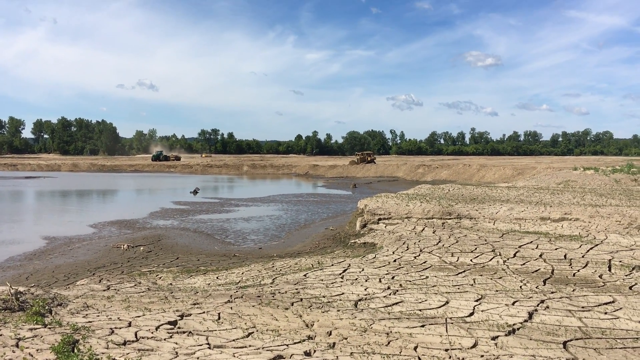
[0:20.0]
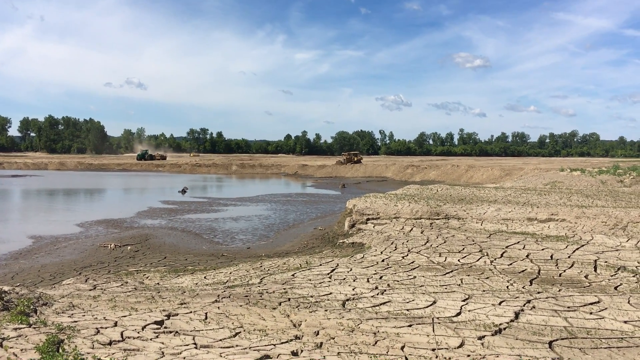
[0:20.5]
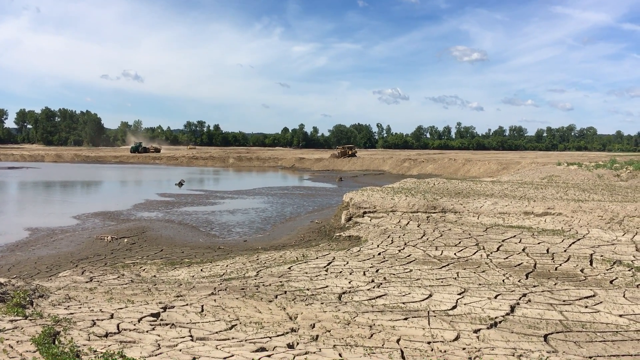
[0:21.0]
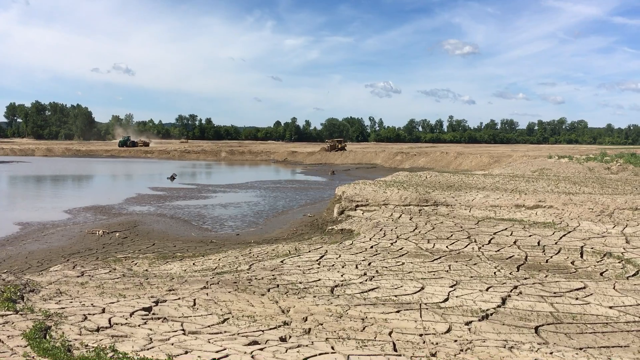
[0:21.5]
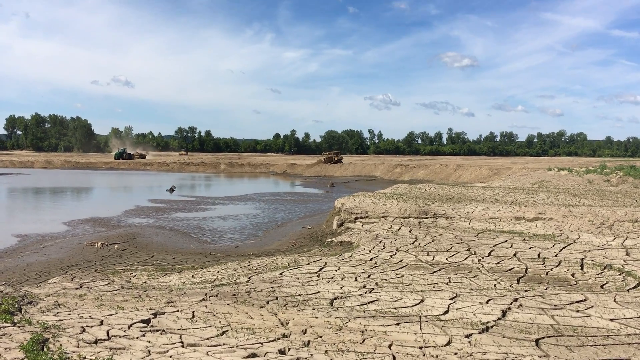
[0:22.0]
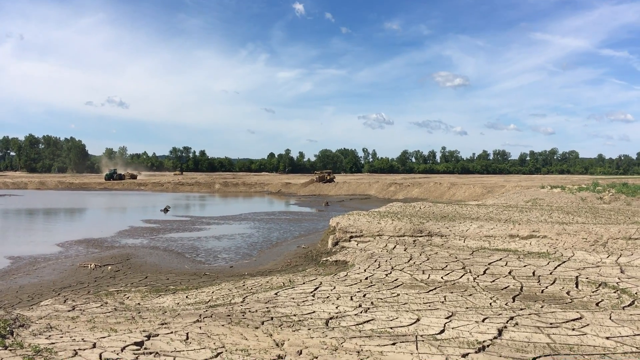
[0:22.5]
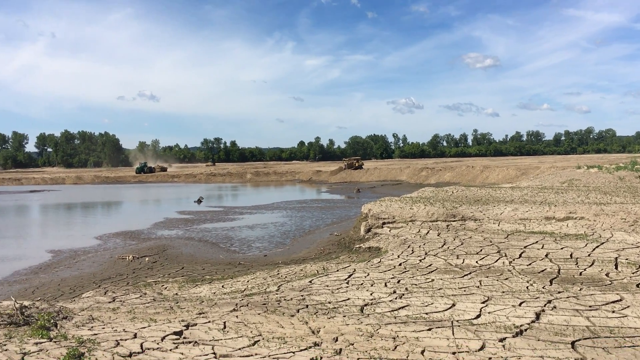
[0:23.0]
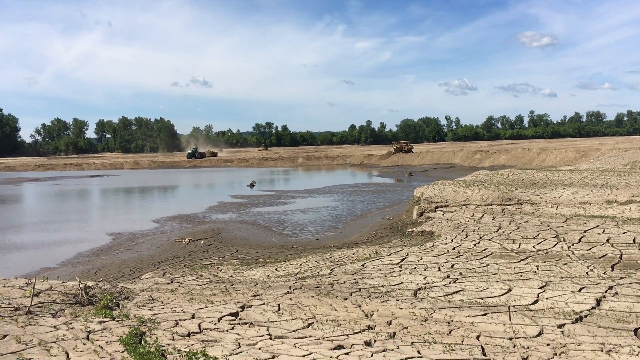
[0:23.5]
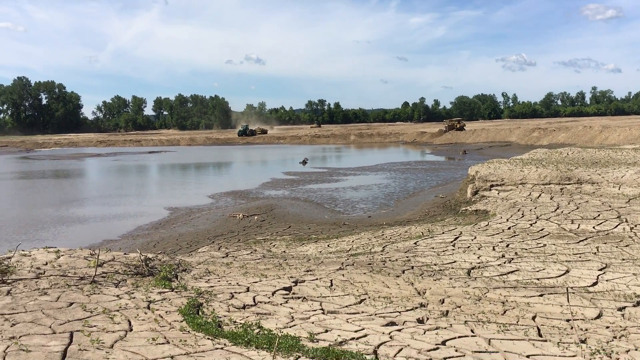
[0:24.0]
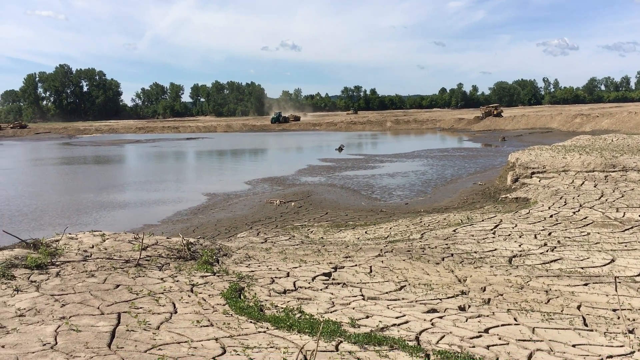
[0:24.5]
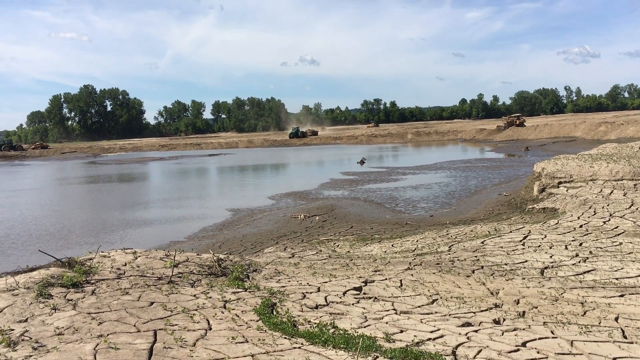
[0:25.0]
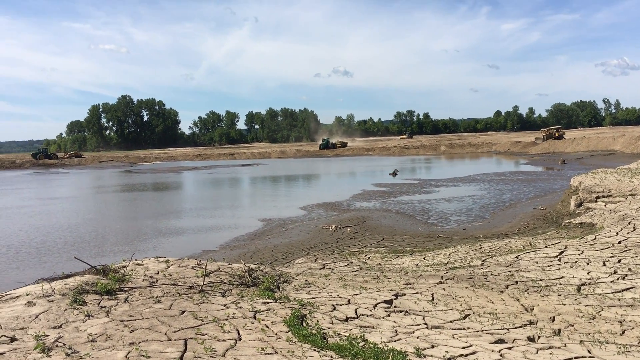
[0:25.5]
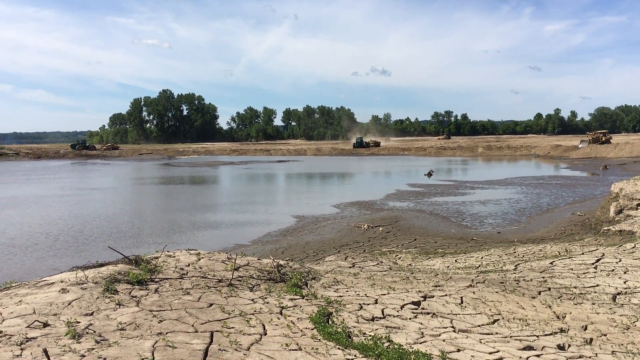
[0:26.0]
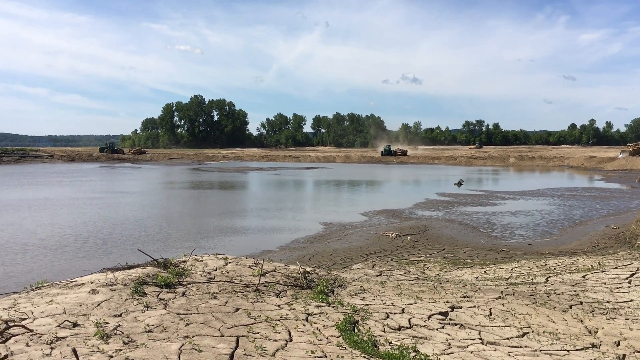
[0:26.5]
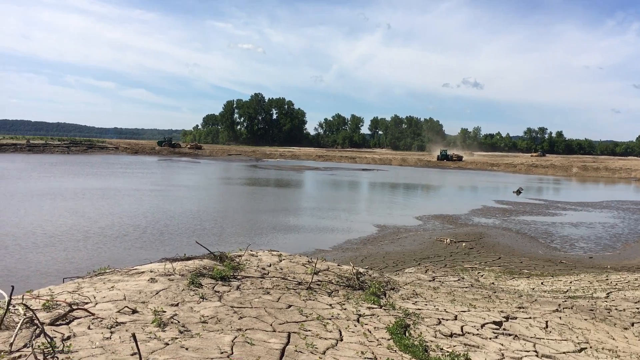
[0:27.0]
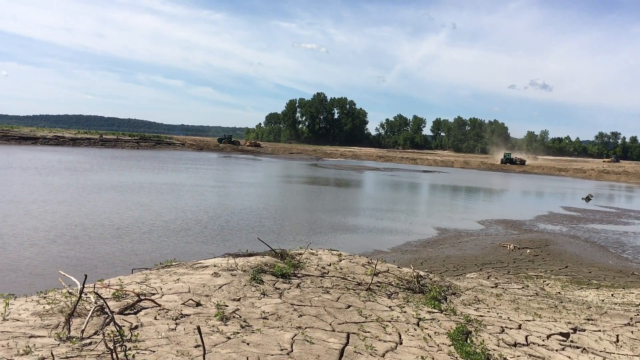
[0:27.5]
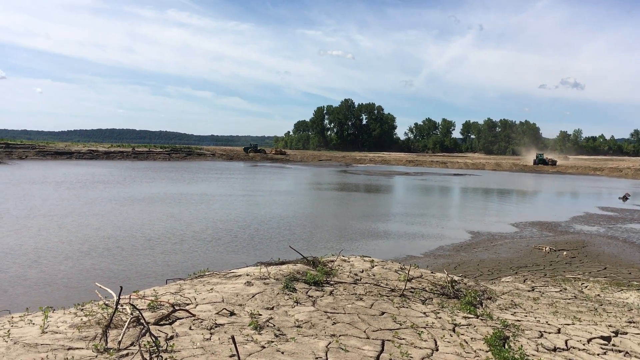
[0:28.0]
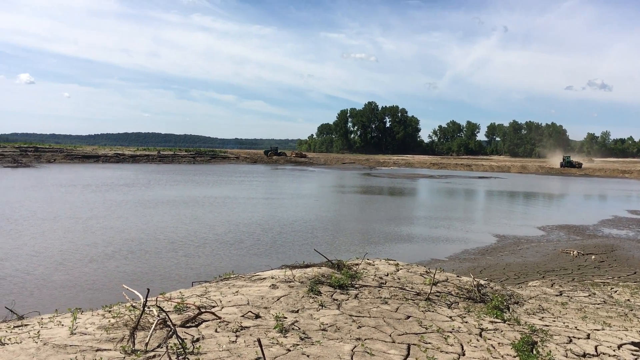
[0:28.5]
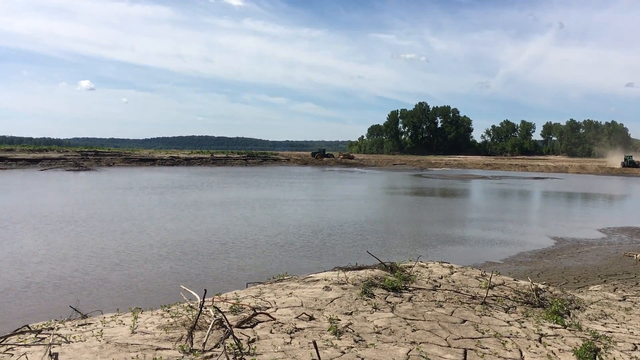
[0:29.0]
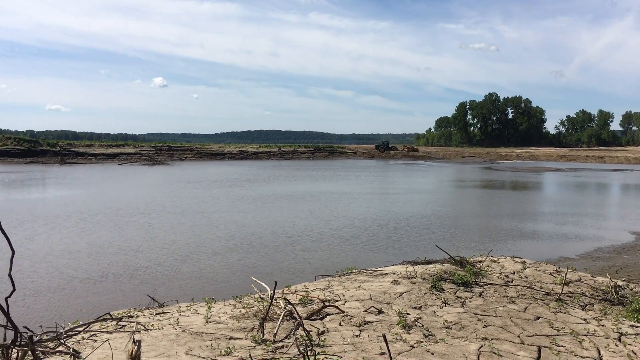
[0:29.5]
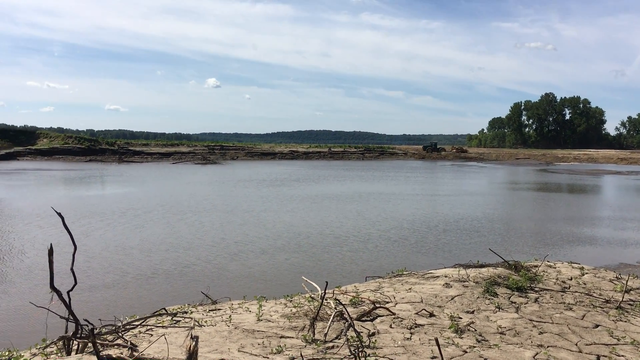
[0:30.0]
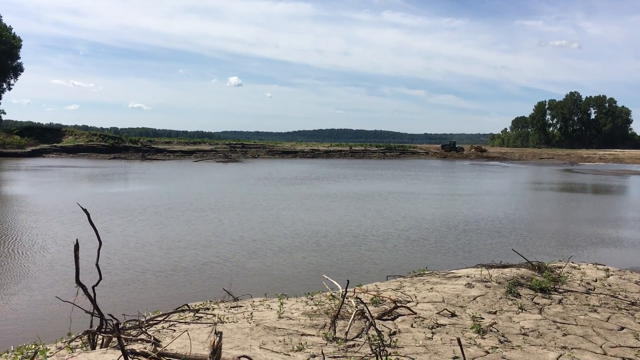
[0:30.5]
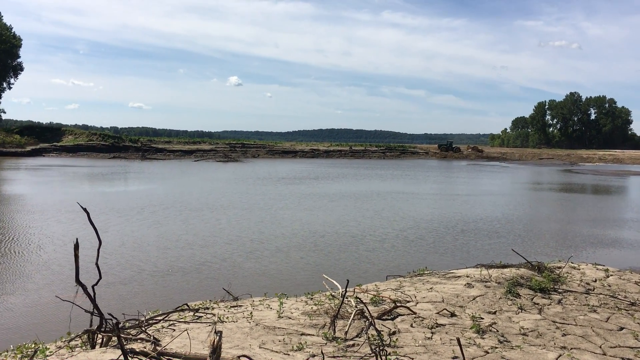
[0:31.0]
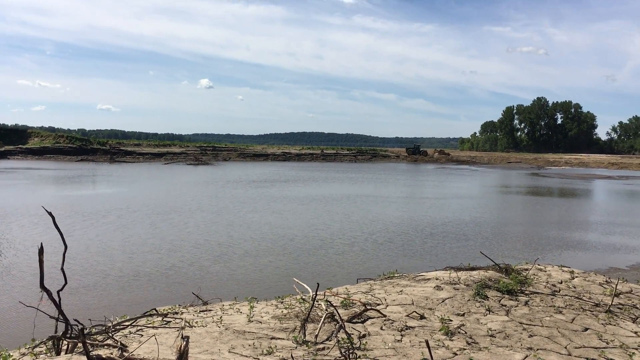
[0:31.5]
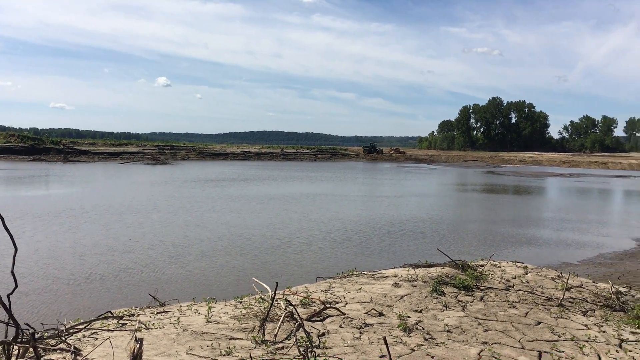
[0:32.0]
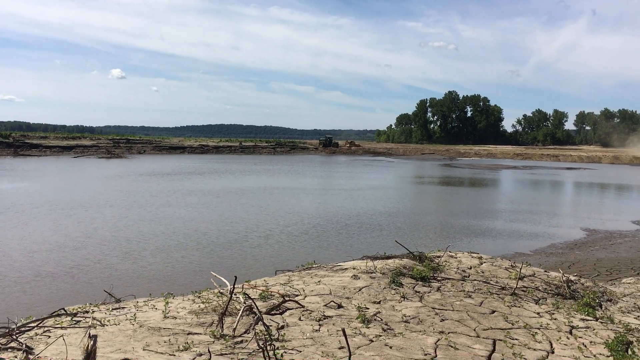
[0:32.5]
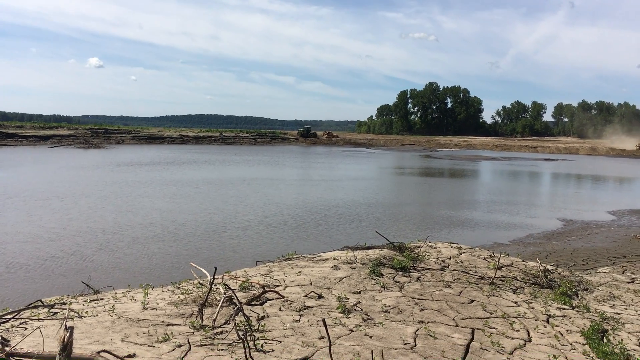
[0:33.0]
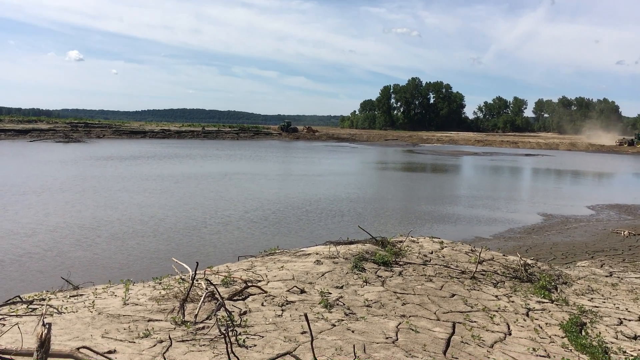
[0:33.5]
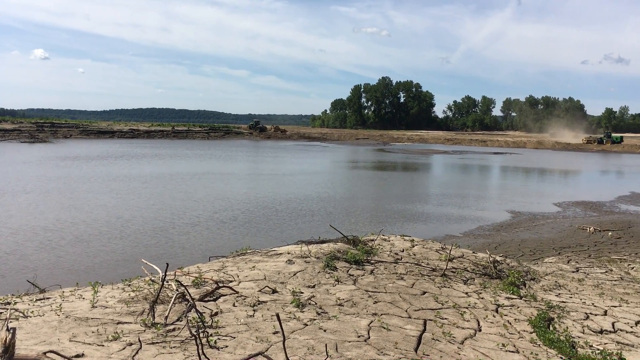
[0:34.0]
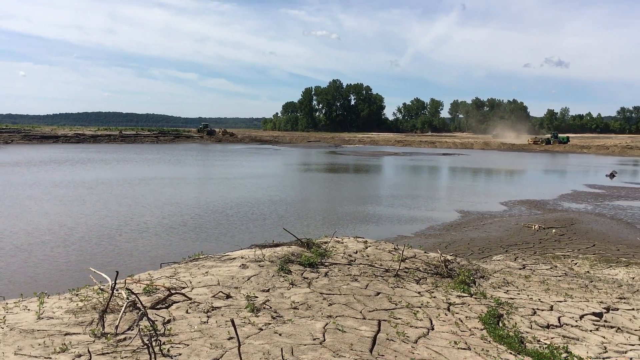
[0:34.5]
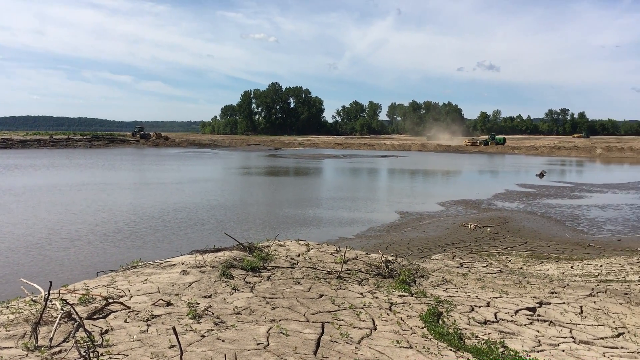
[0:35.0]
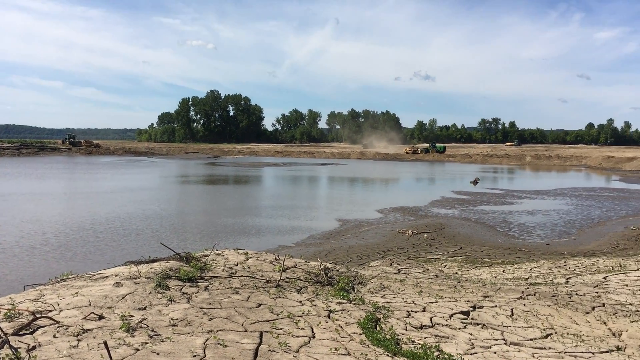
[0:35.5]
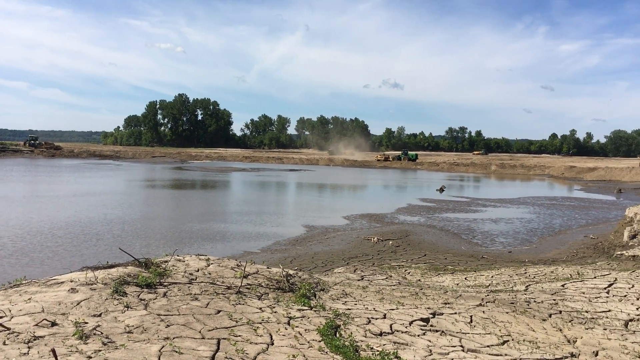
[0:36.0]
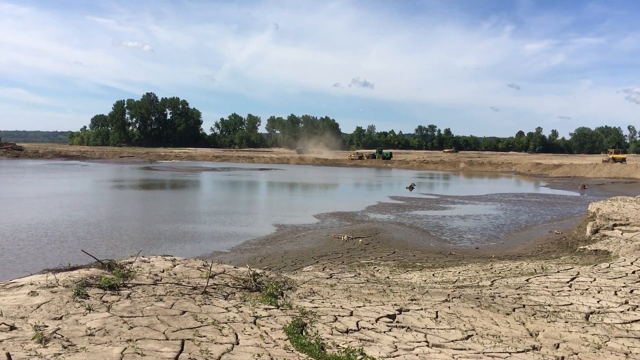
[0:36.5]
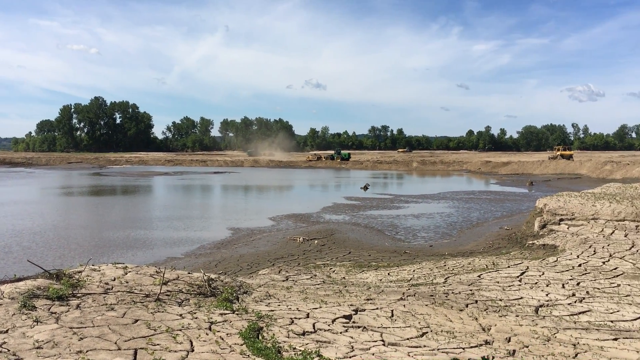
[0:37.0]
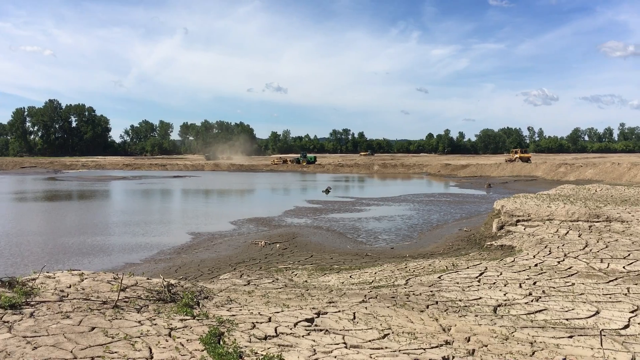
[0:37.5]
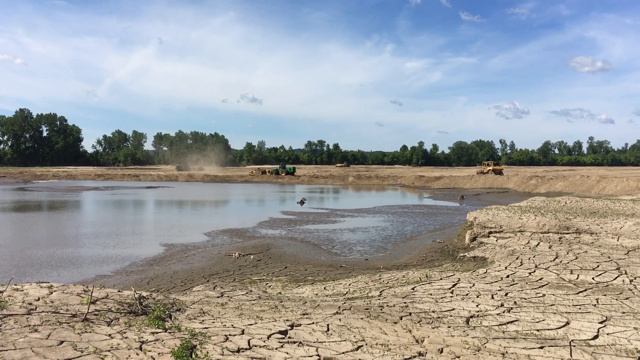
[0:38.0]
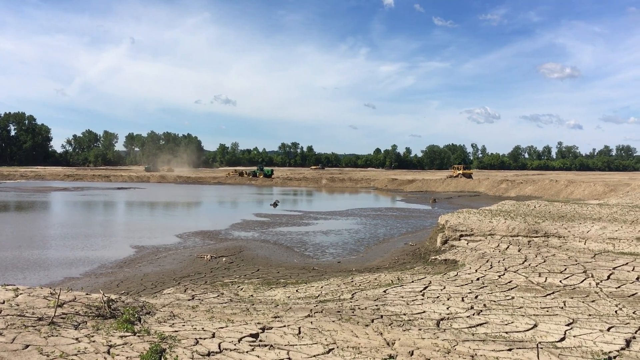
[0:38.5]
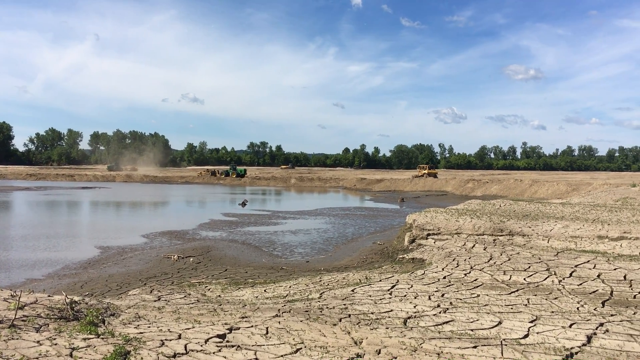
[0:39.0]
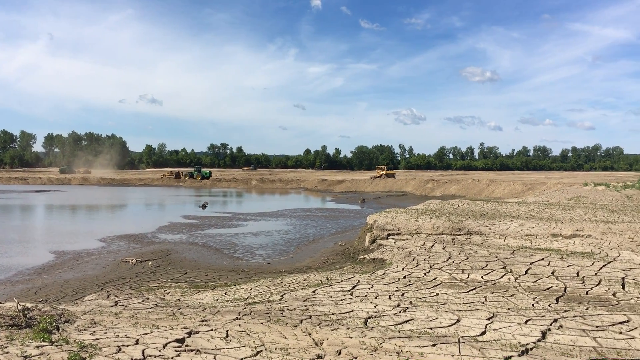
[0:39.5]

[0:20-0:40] The camera person seems to be trying to stabilize the camera or move it around as they follow the machines along dirt pathways. The camera pans to the left to follow the leftmost vehicle, then pans to the right to follow the one that was in the center. Above is a sort of blue sky, a wide, vast area where clouds are visible. In the background there is greenery, with trees on the upper left and from the center to the upper right, so there are a lot of sort of floral areas in the back, while the specific area where the camera person is looks cleared out. The camera rotates from right to left, showing the surroundings. More greenery extends all the way to the left, and at the leftmost angle there is a very large tree to the left.